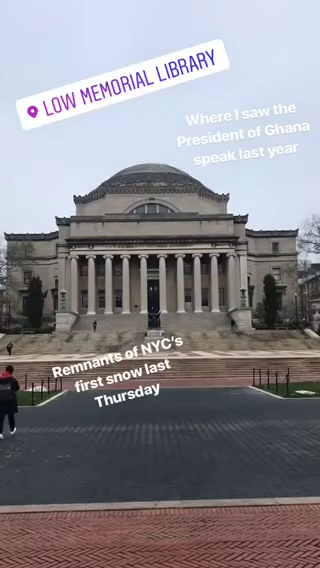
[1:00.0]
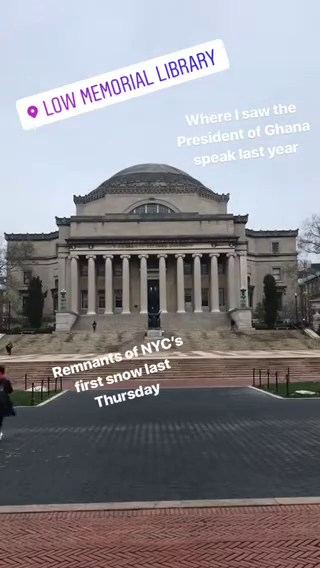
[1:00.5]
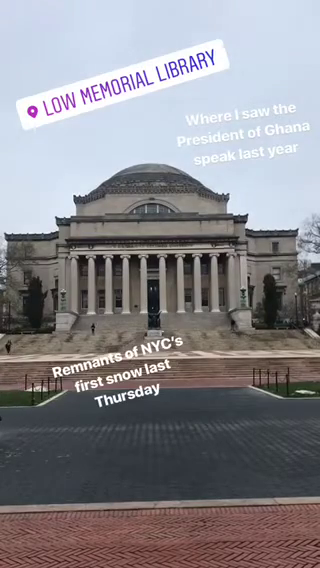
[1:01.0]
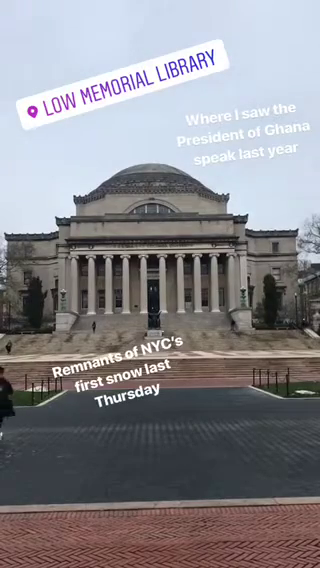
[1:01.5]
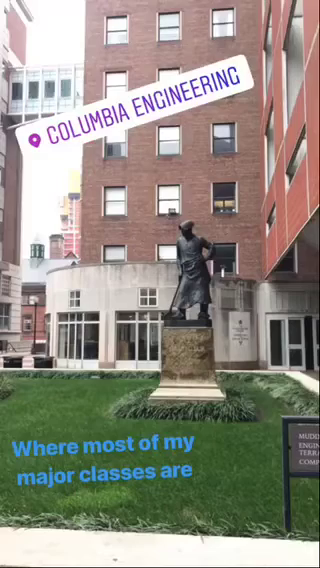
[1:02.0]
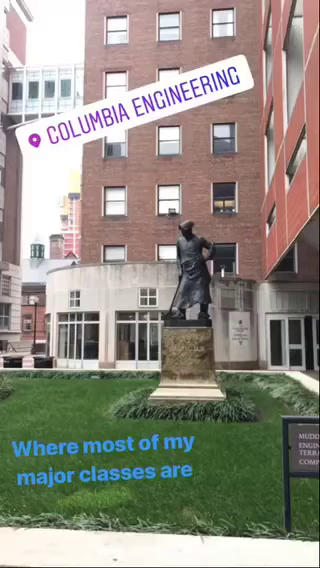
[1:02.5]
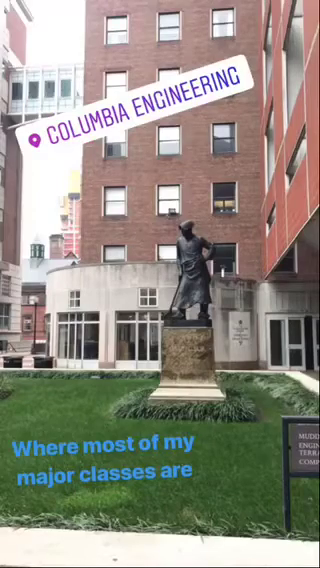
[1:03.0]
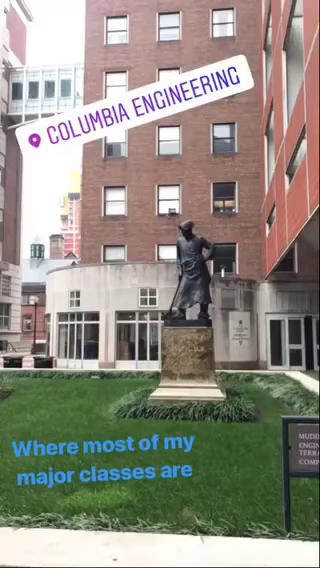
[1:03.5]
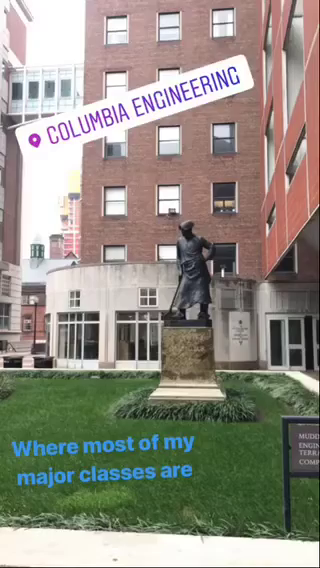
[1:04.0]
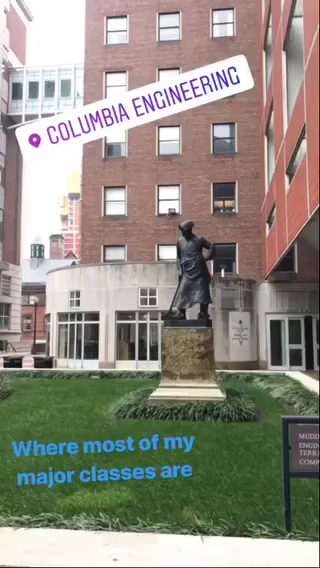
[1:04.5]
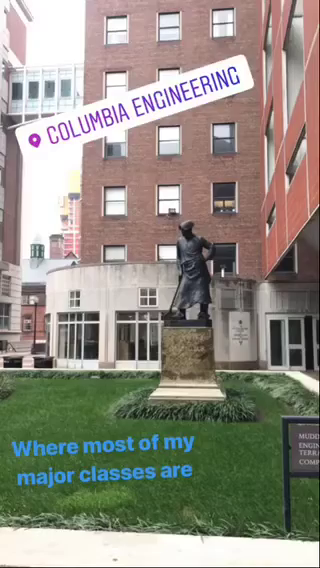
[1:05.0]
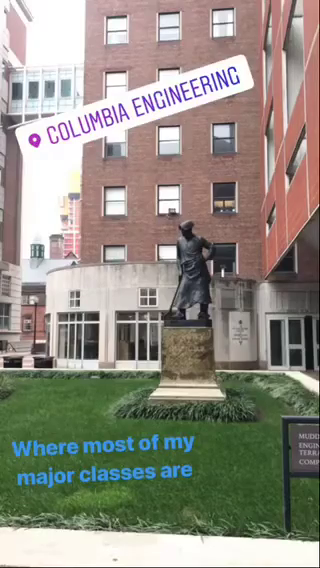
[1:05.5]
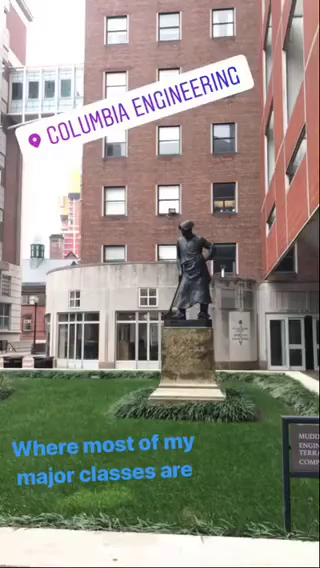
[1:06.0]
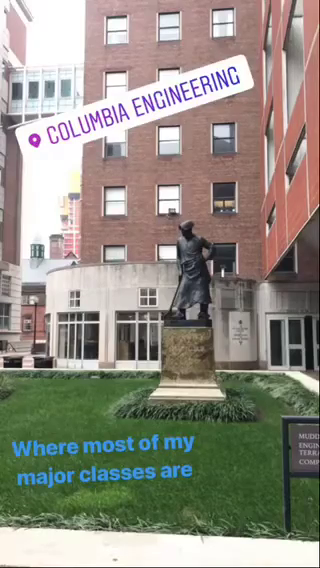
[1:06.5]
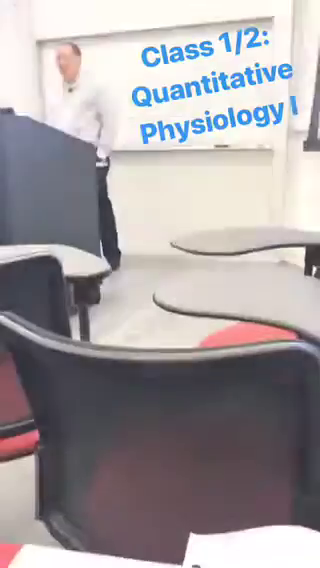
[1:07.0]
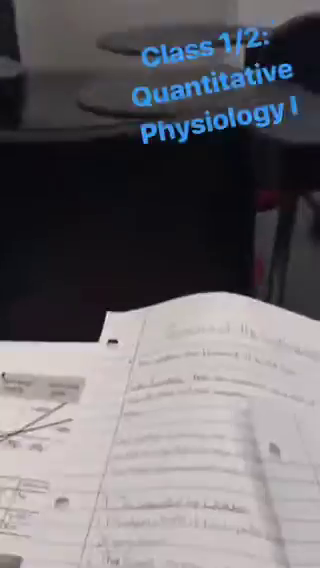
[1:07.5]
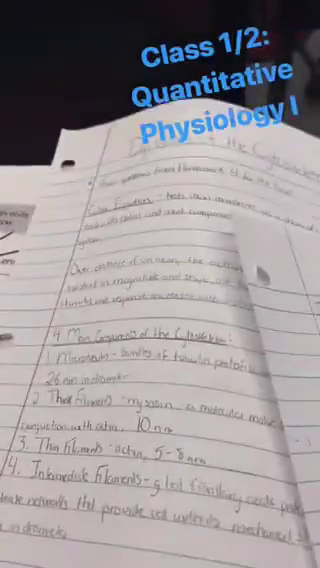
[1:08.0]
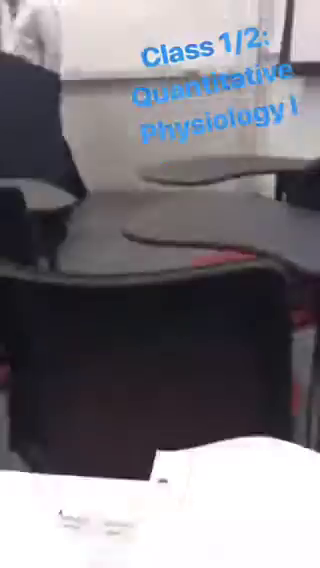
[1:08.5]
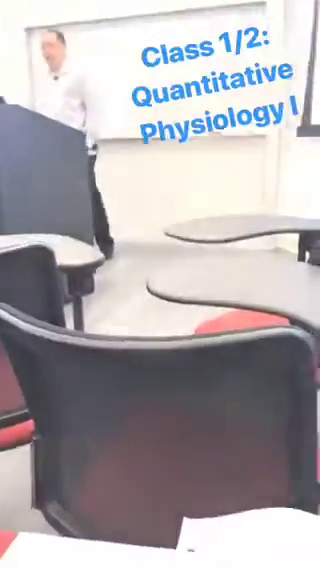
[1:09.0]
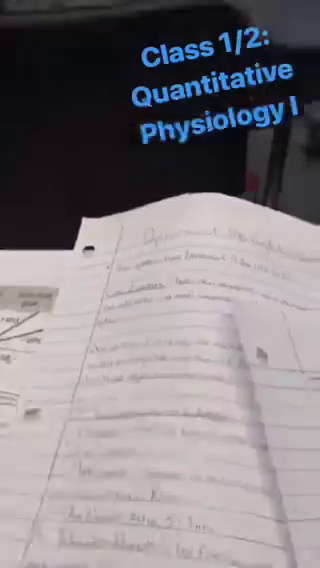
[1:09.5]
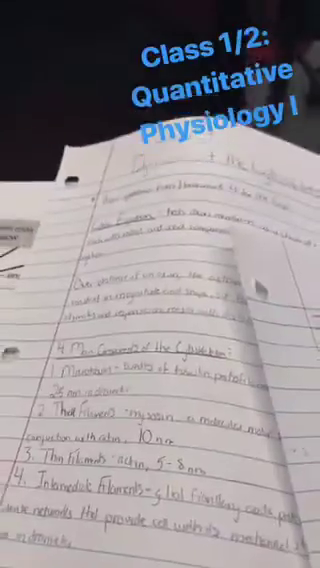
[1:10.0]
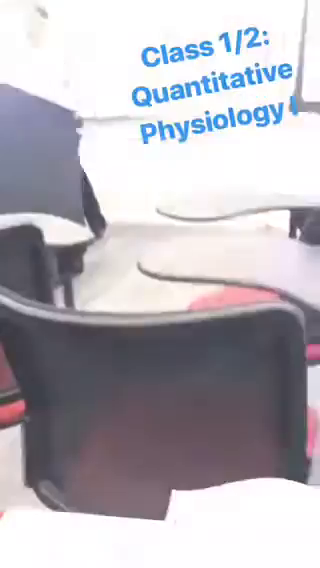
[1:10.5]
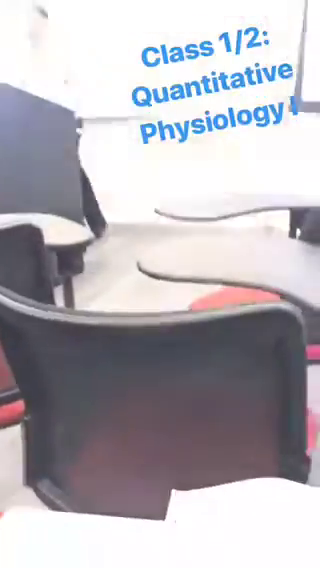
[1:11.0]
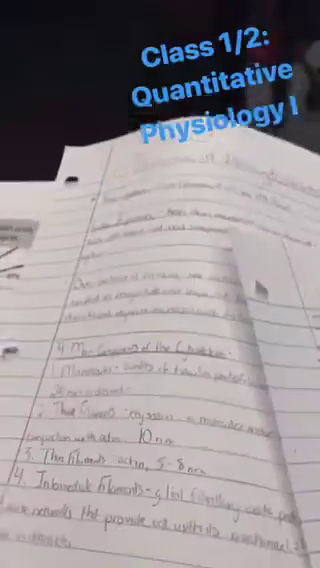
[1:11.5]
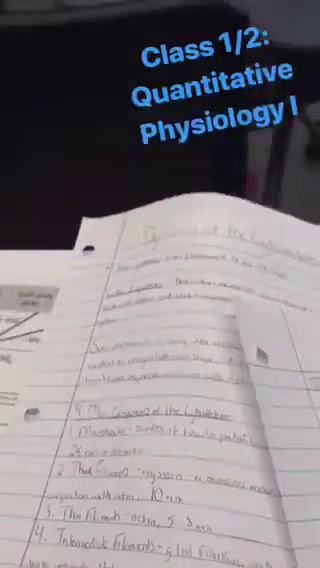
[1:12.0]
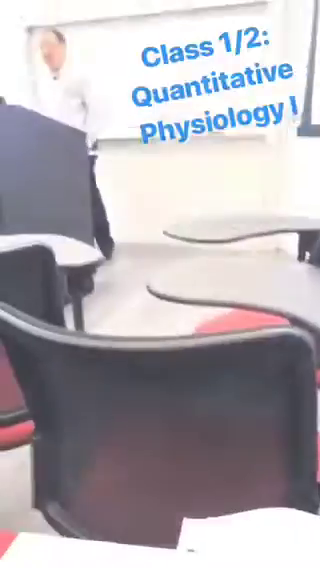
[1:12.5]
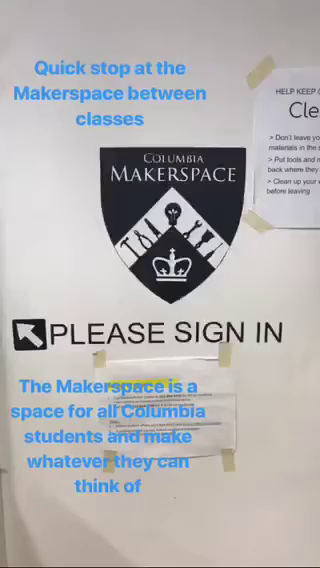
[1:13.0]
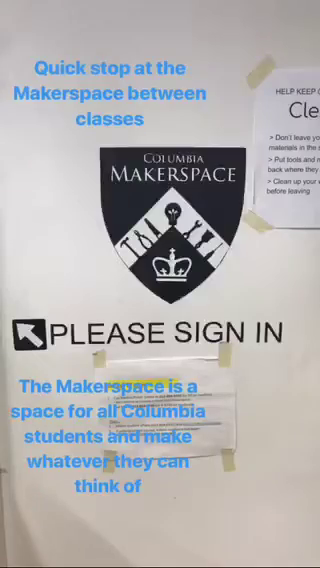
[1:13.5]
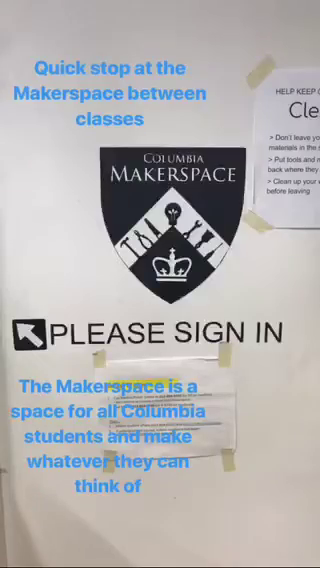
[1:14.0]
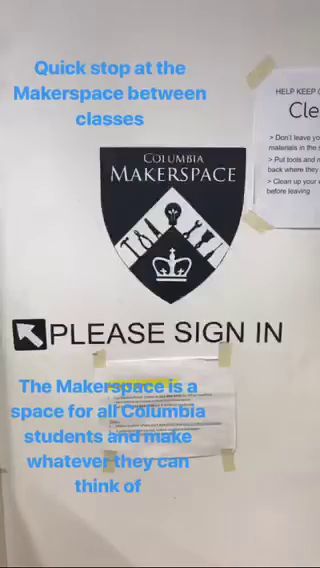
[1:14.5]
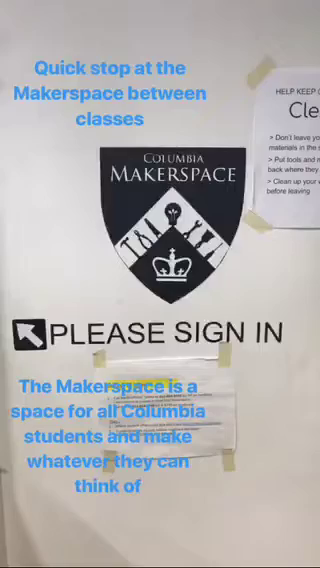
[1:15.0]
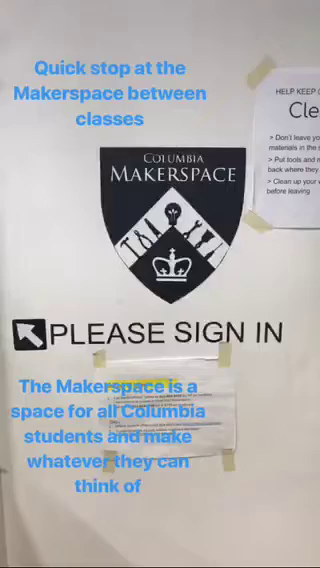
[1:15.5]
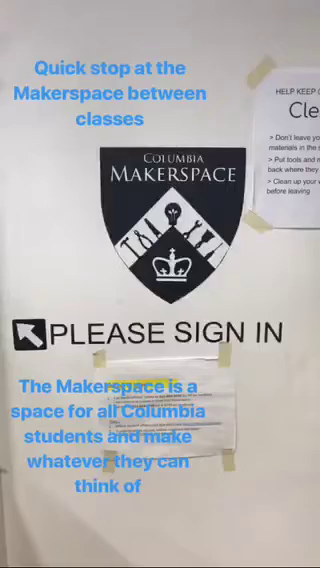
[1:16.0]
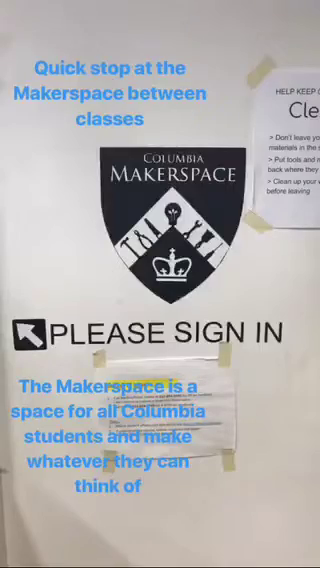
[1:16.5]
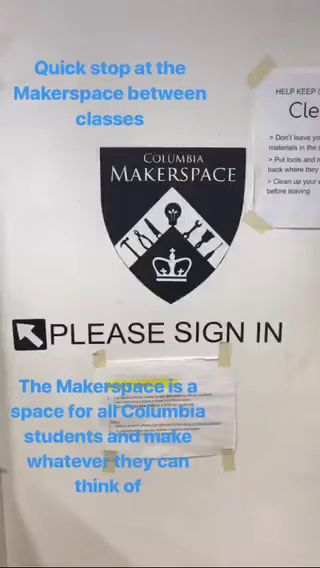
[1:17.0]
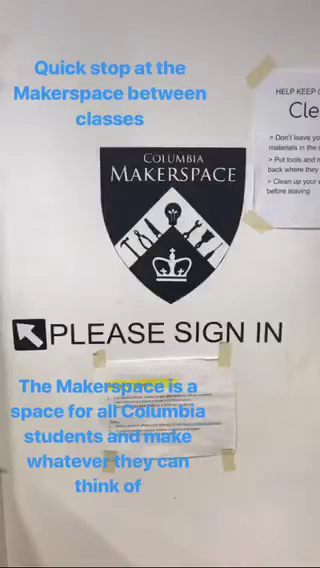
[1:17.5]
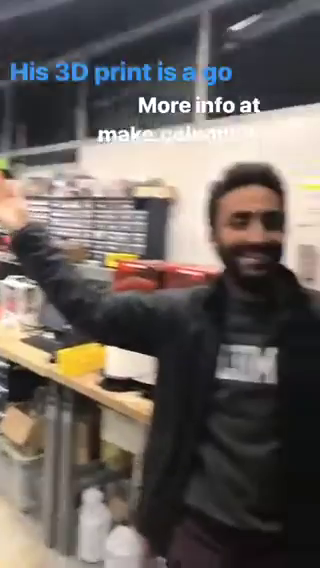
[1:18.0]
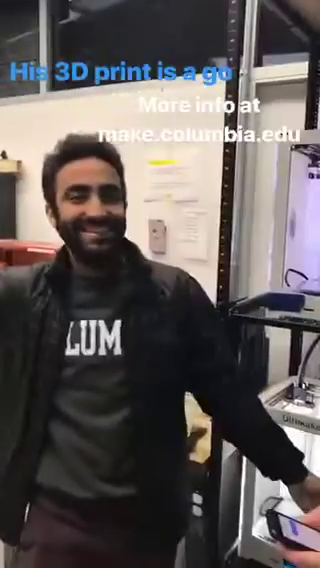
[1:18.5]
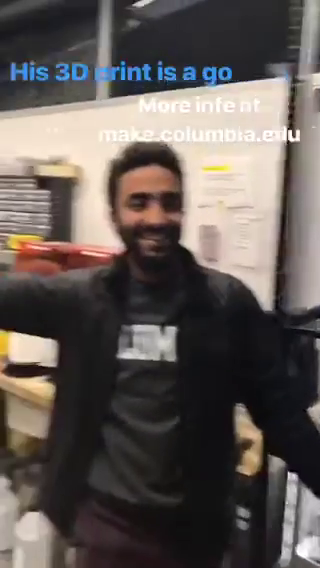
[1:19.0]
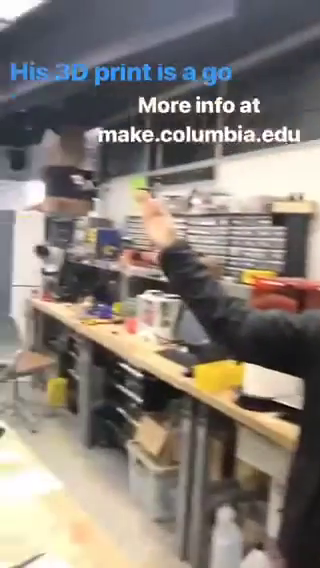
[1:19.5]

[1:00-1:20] Text reads "Low Memorial Library", and a very big white library is shown with a foggy blue setting above it. On the right, text reads "where I saw the president of Ghana speak last year", and at the bottom it reads "remnants of New York City's first snow last Thursday". There is a tarred road, and a man crosses the road going the other direction. A building is shown with the text "where most of my major classes are". A statue built into the back of this building holds its waist and is dressed in gray. There is a green lawn on the ground, white windows, a green building, and a brown building on top. As he plays with his phone, test papers and papers being written on are shown, moving between front and back. A page pops up reading "please sign in", along with text reading "the marker space is a space for all Columbia students and make whatever you can think of". The video then cuts off.